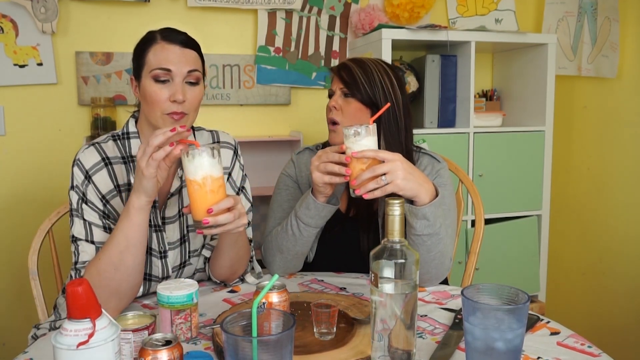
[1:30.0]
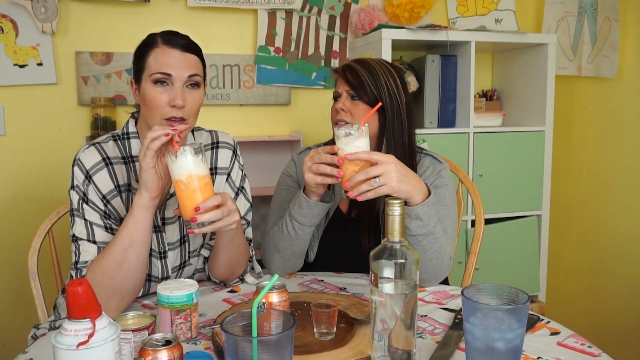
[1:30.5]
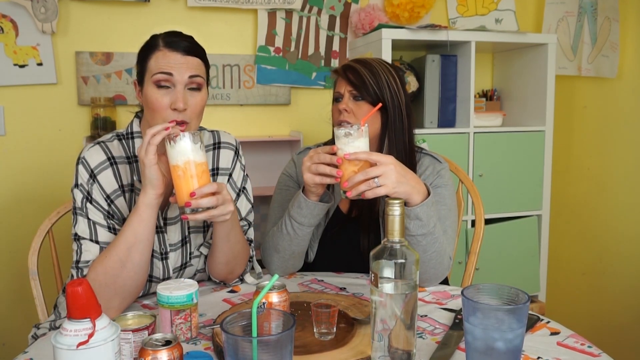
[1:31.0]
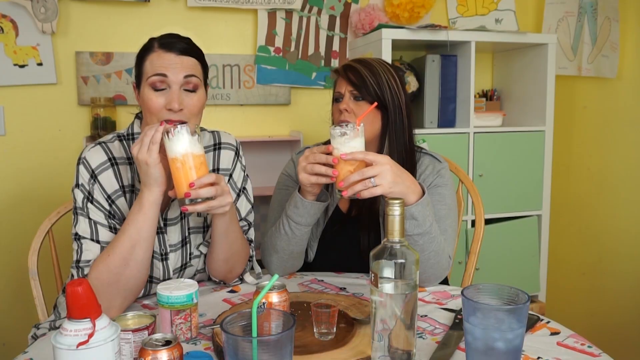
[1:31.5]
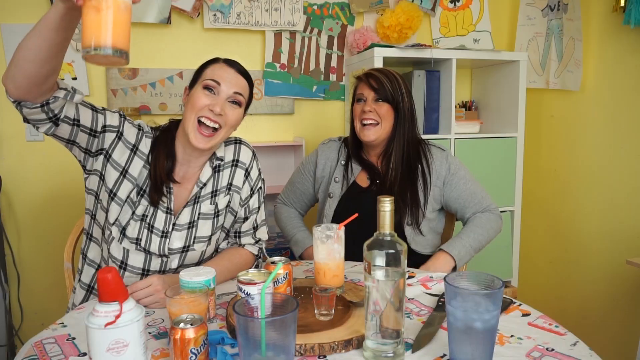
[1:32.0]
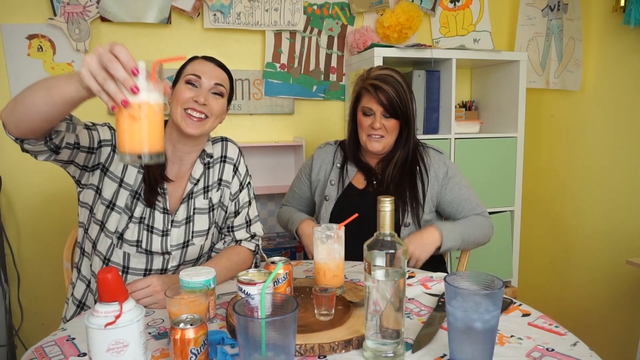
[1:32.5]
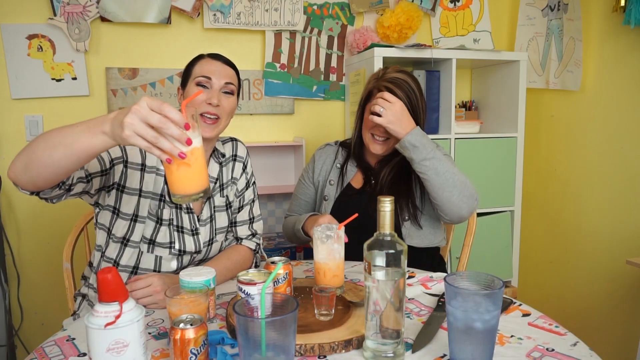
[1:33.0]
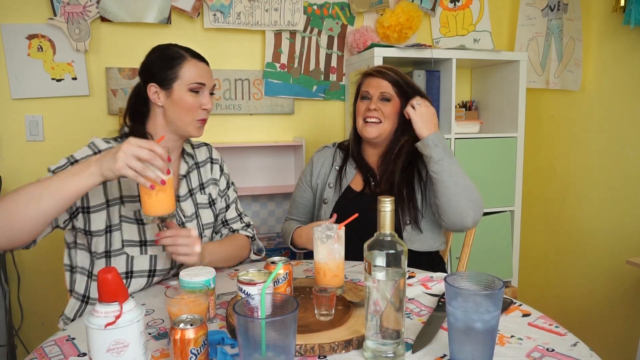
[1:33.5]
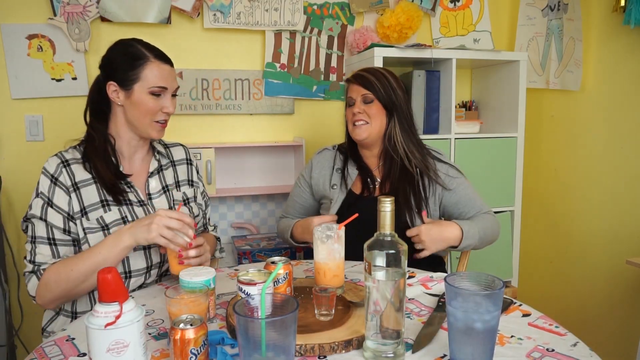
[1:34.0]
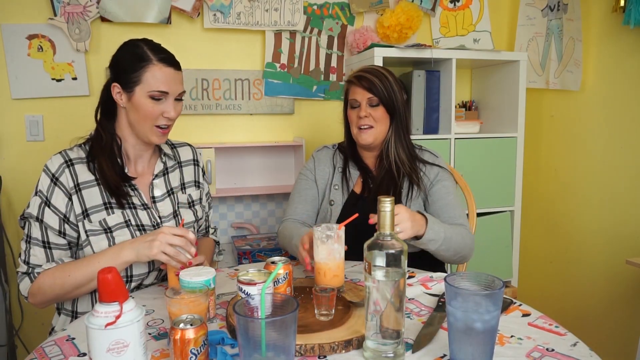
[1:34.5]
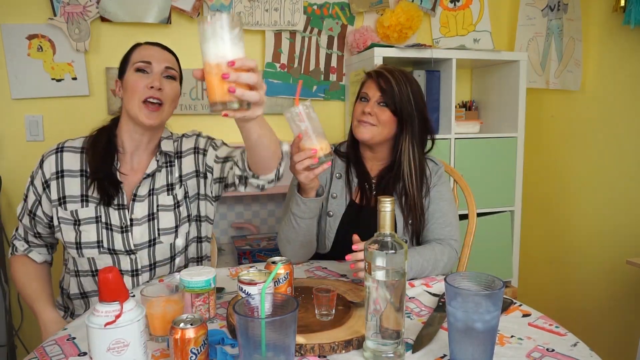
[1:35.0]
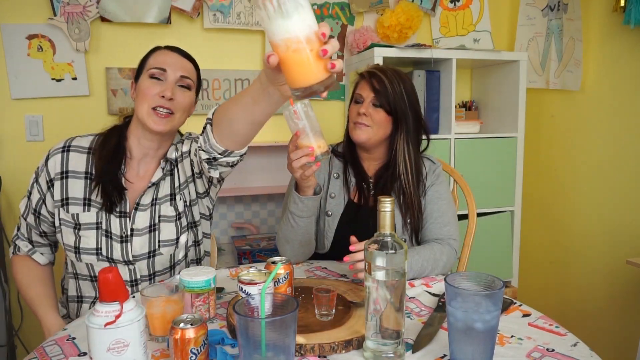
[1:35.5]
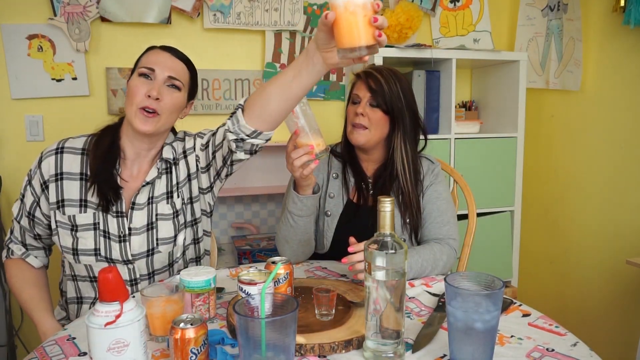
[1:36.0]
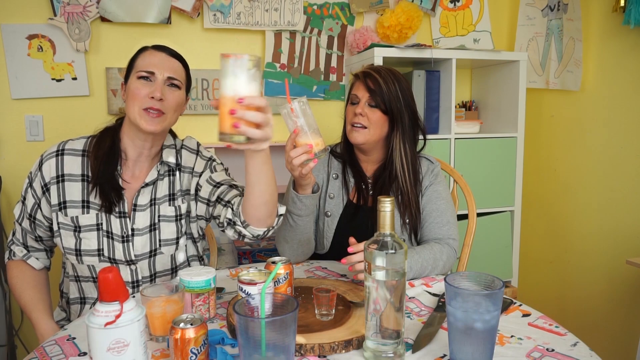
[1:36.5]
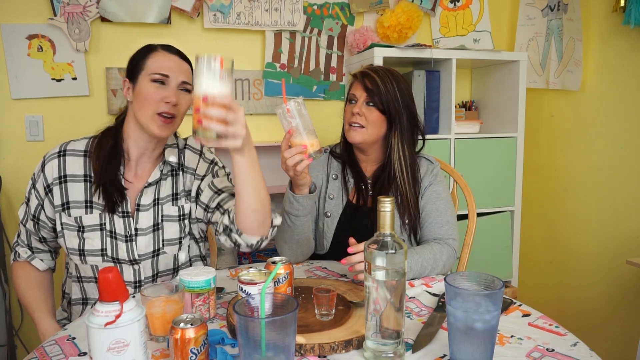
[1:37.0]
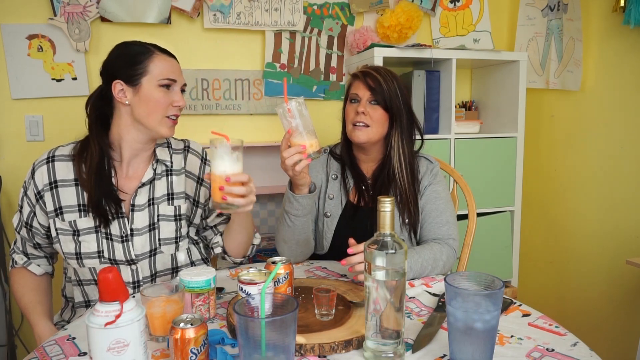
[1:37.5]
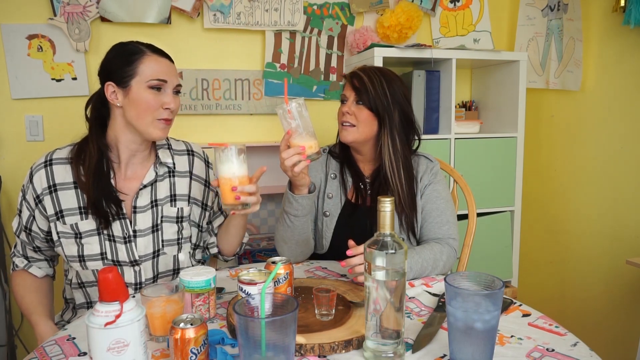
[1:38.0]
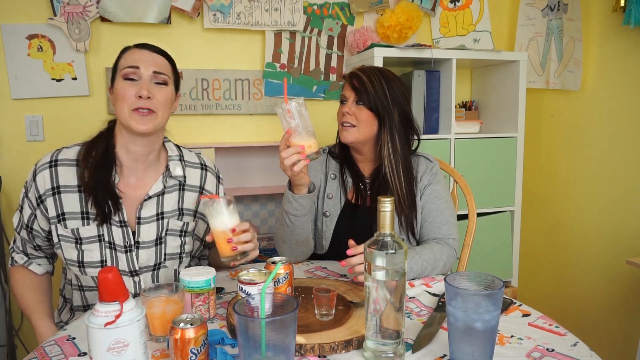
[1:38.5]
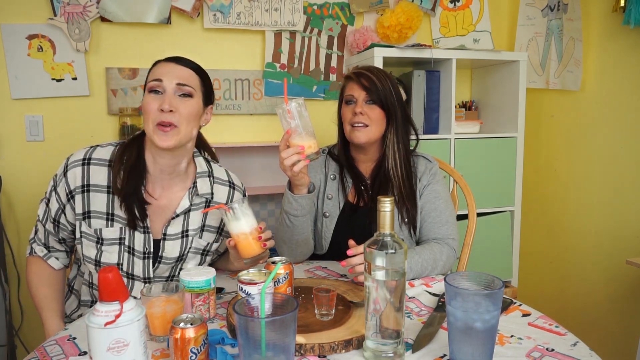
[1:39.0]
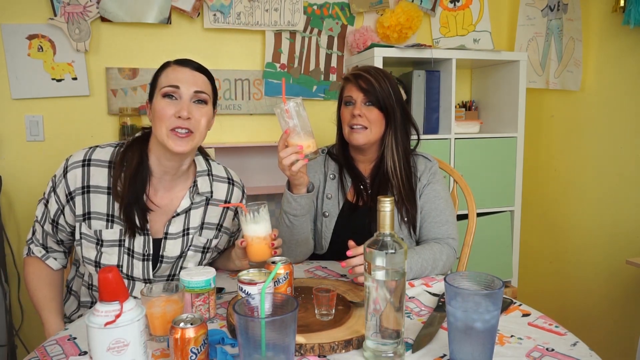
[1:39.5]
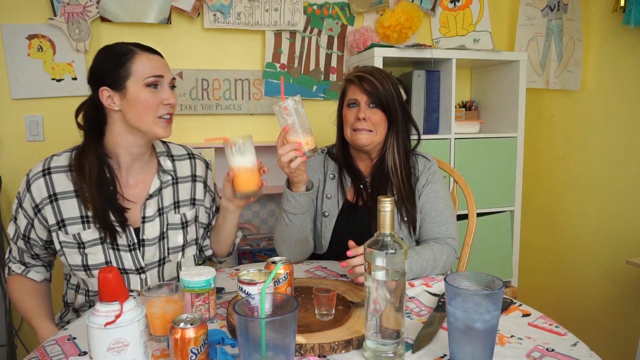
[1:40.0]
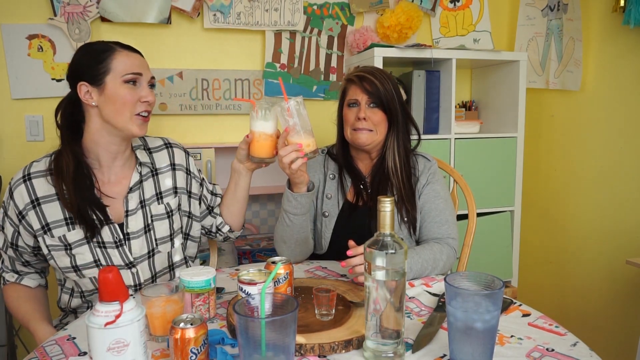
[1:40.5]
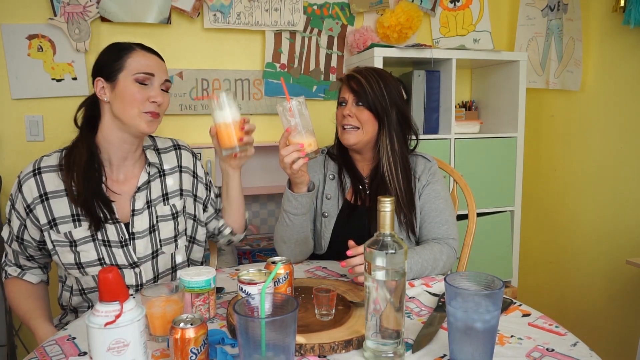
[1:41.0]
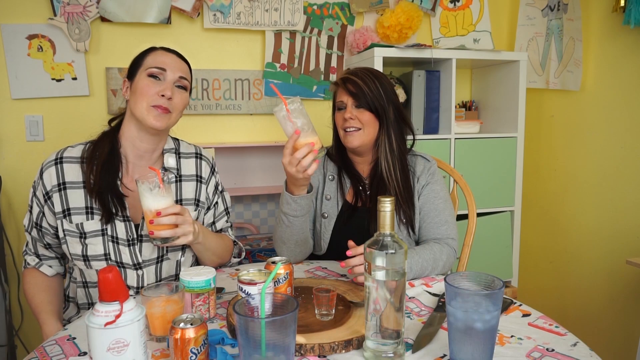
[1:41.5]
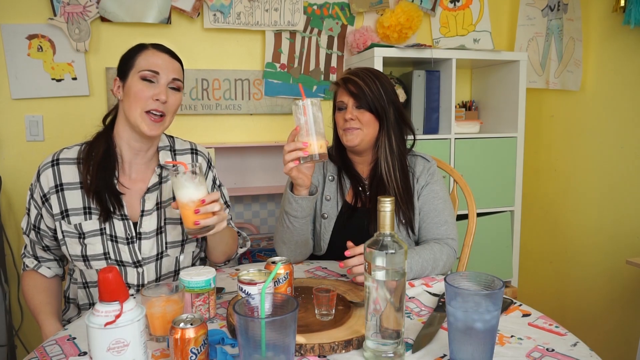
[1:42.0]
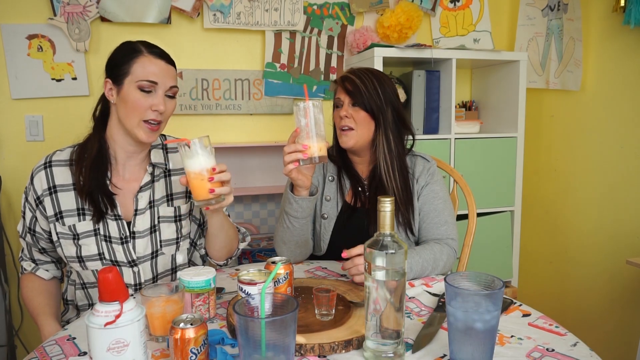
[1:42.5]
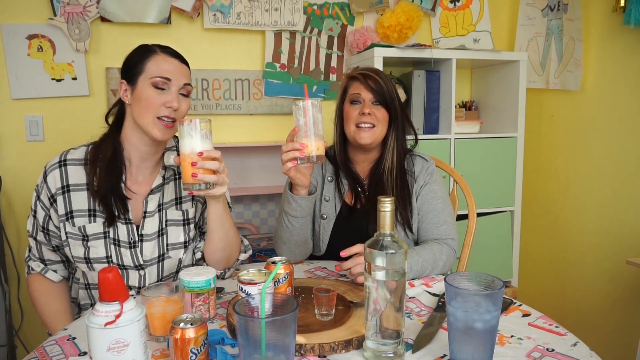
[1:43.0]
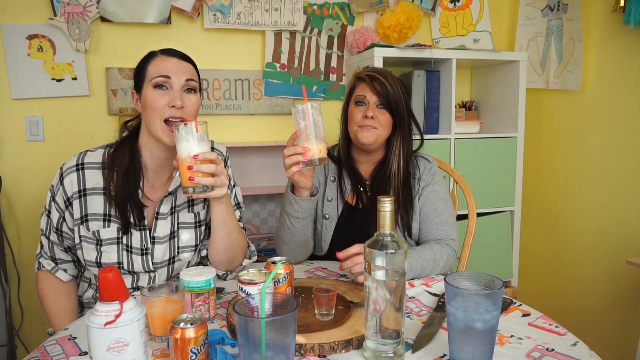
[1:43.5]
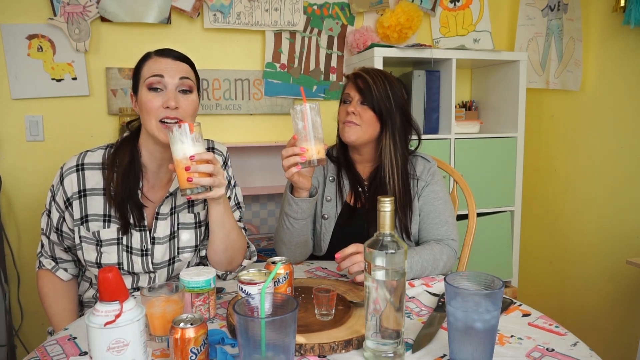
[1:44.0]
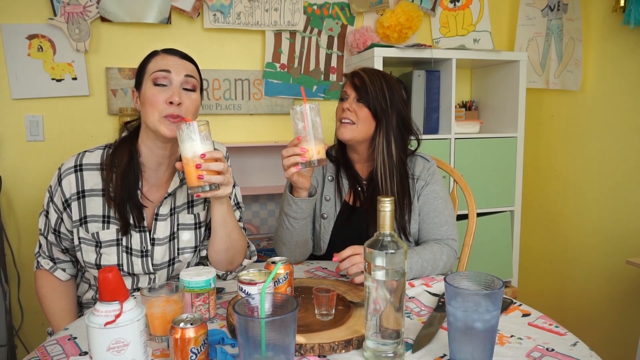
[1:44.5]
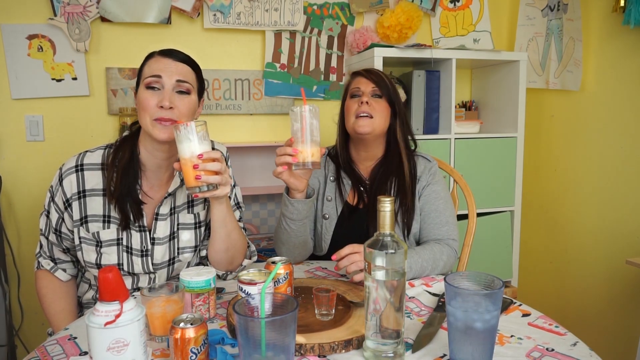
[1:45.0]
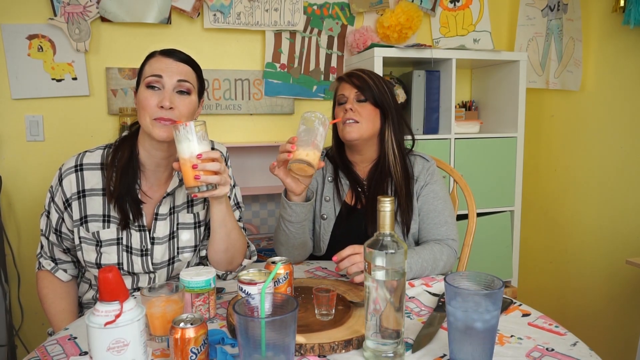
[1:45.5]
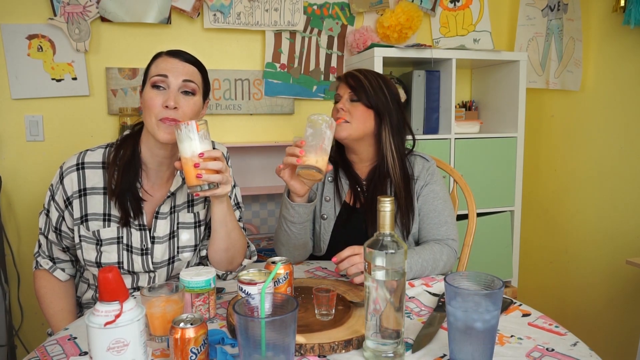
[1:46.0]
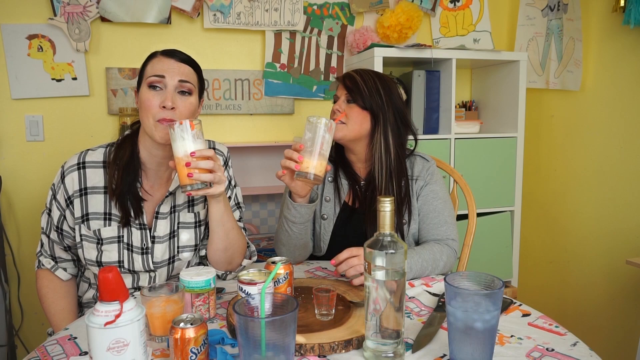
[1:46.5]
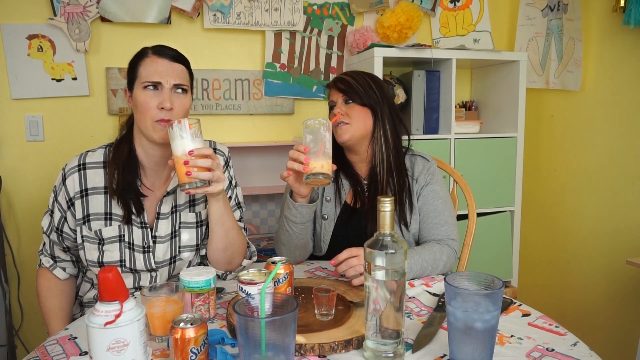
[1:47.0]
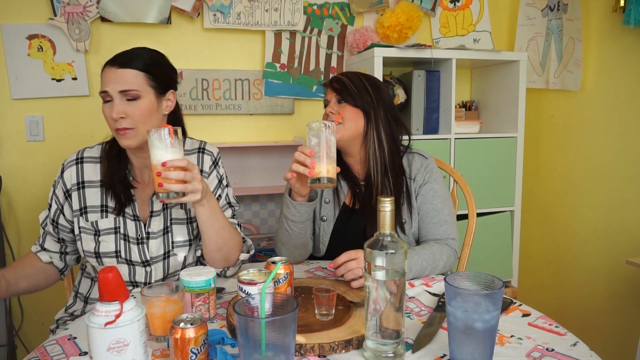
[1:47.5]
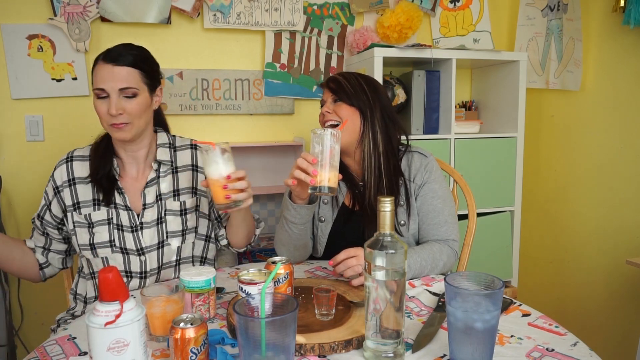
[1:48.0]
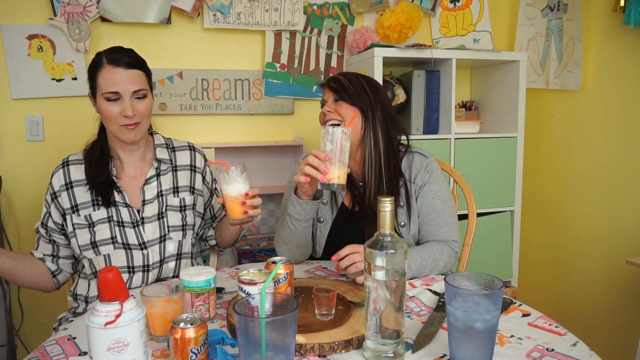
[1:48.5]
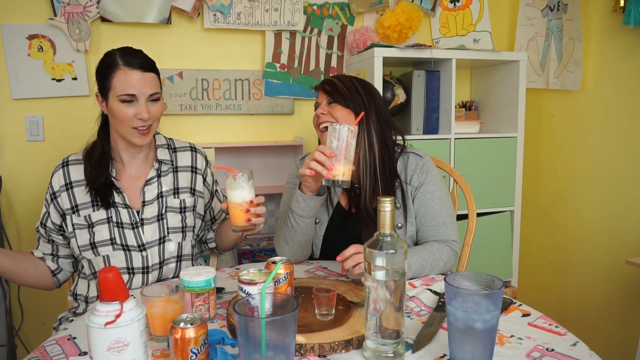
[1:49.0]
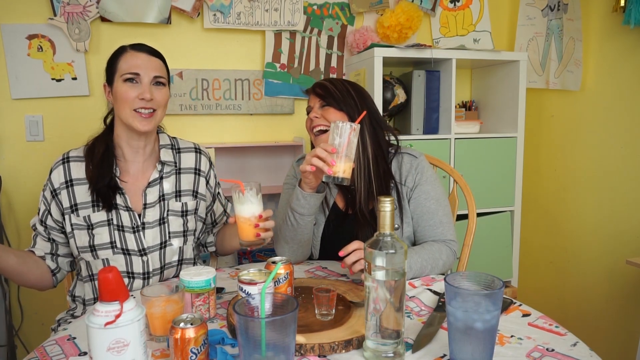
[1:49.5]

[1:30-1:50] Both women continue to sit at the table. The woman on the left looks at her glass and appears to be judging the taste of the beverage; the liquid is orange through most of the glass, with whipped cream at the top. The woman on the right faces the woman on the left and talks to her, presumably about the drink, while the woman on the left keeps taking sips. The camera does a quick flash, and both women are shown talking, laughing and having a very good time. The woman on the left appears to make a cheers at the camera, and the woman on the right appears to have finished most of her drink, though she is only seen taking a sip once or twice. The woman on the left appears to do most of the talking, facing the camera, while the woman on the right makes a lot of different faces and laughs a lot.